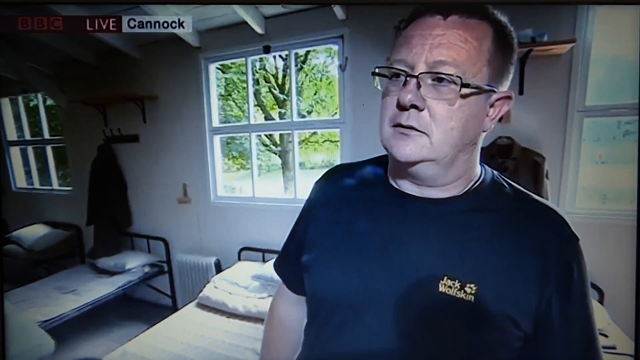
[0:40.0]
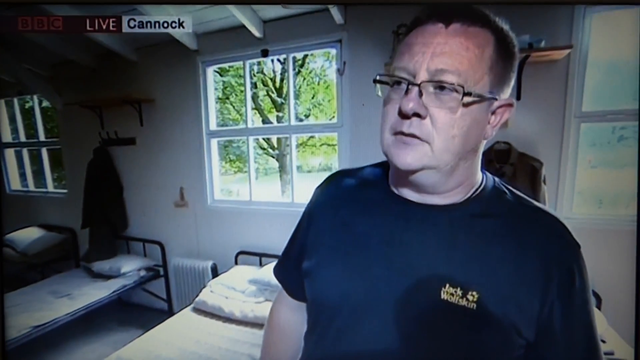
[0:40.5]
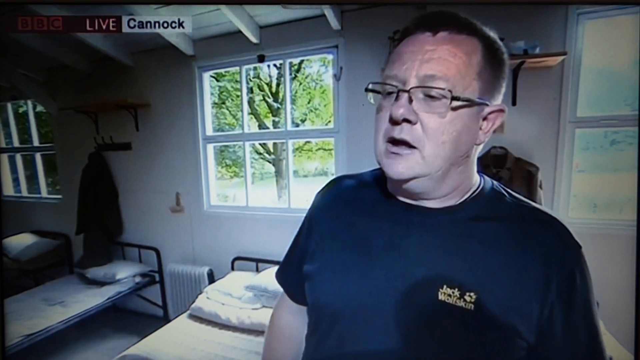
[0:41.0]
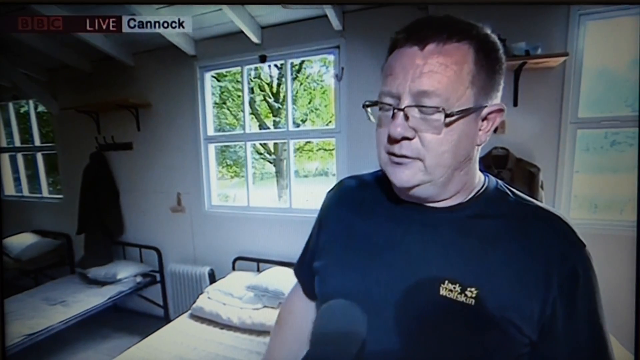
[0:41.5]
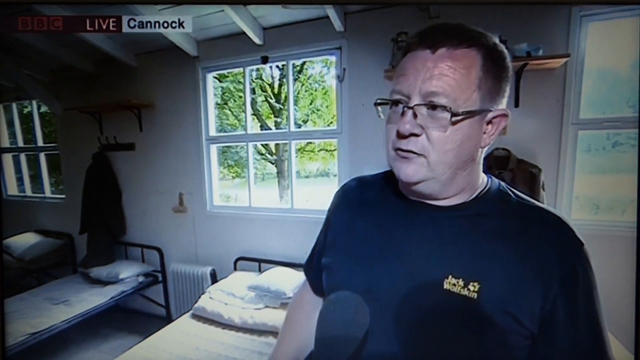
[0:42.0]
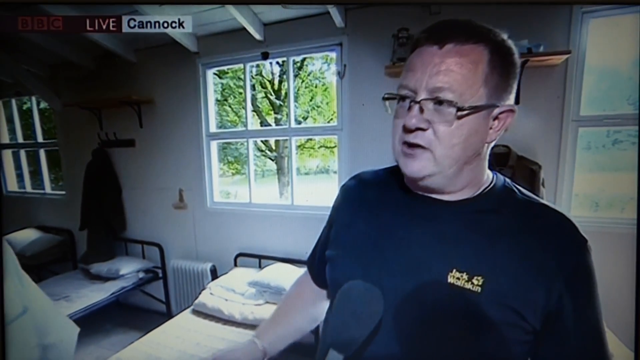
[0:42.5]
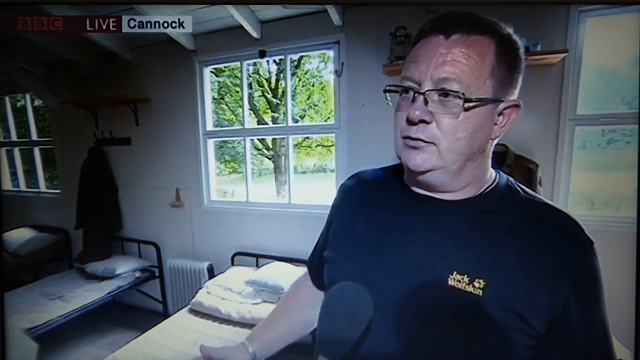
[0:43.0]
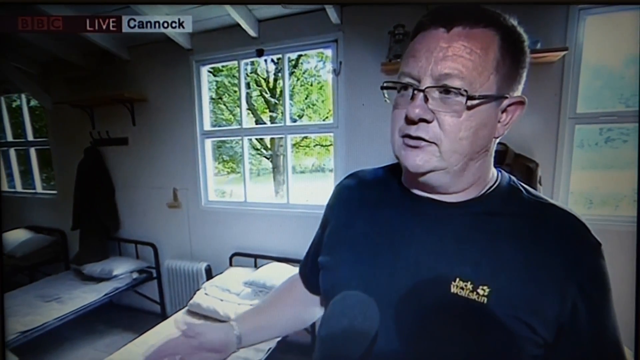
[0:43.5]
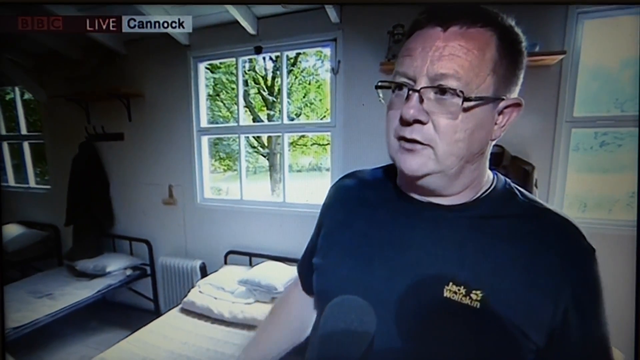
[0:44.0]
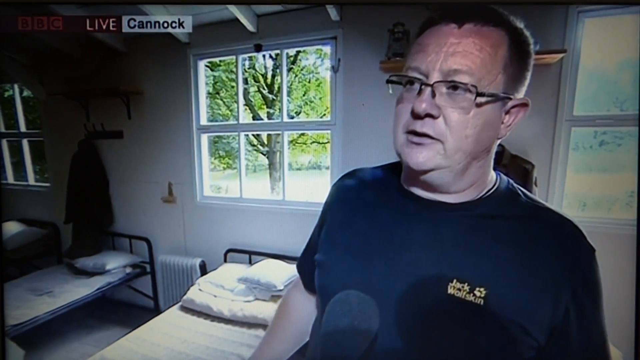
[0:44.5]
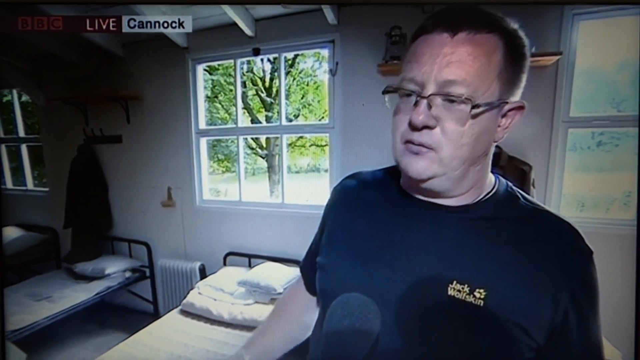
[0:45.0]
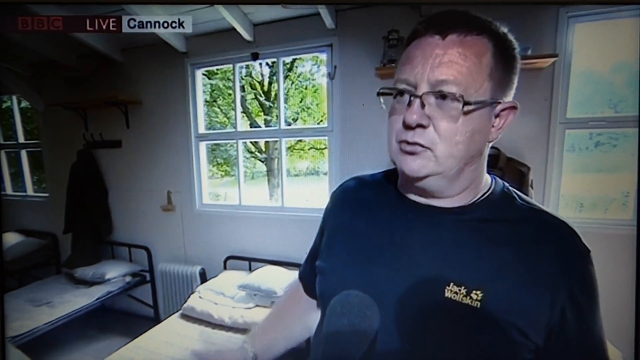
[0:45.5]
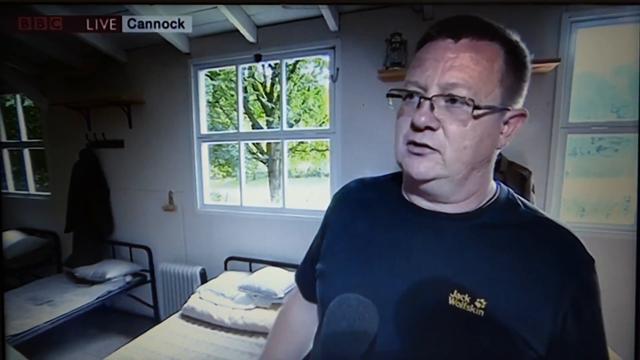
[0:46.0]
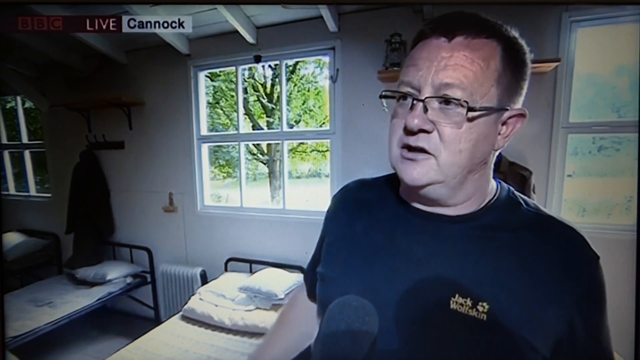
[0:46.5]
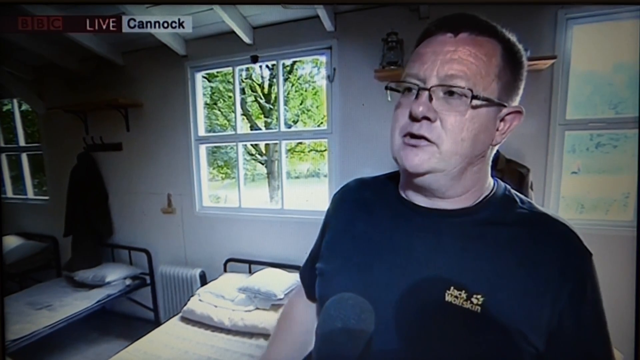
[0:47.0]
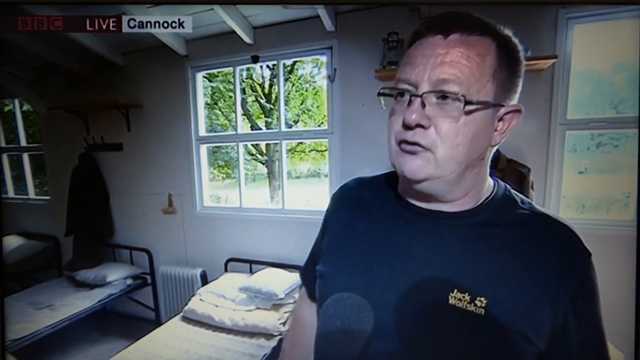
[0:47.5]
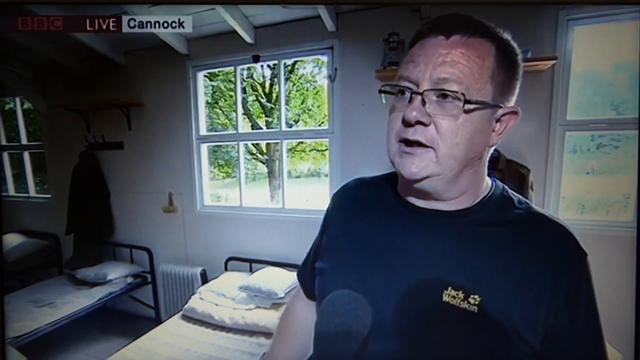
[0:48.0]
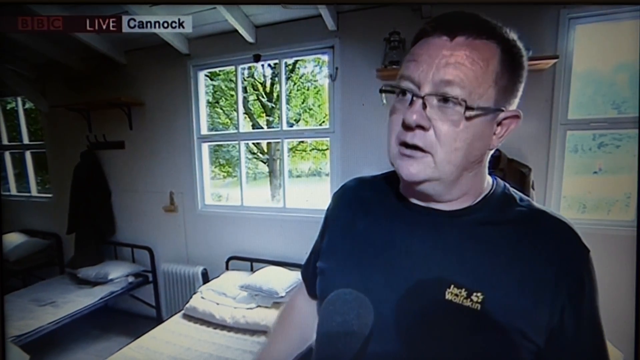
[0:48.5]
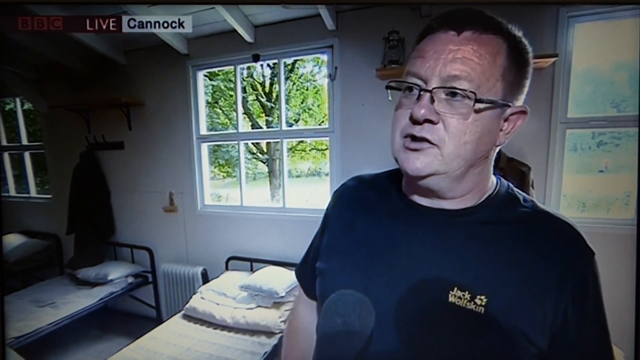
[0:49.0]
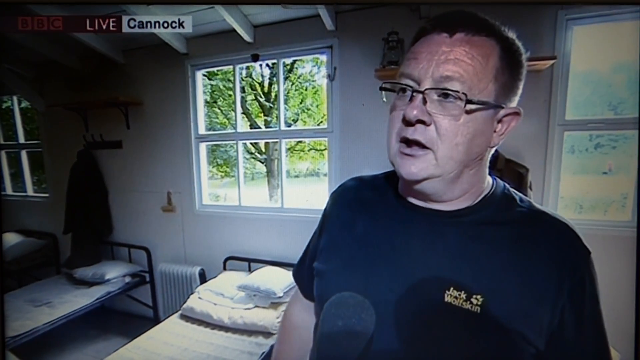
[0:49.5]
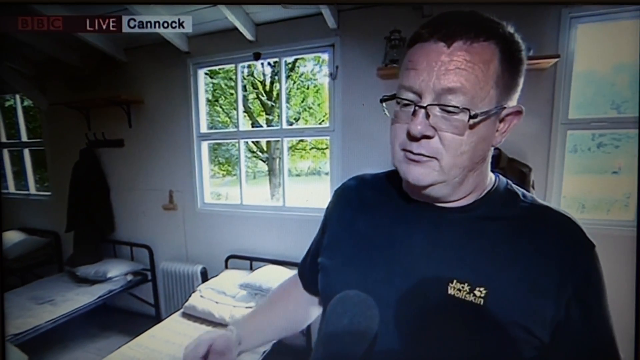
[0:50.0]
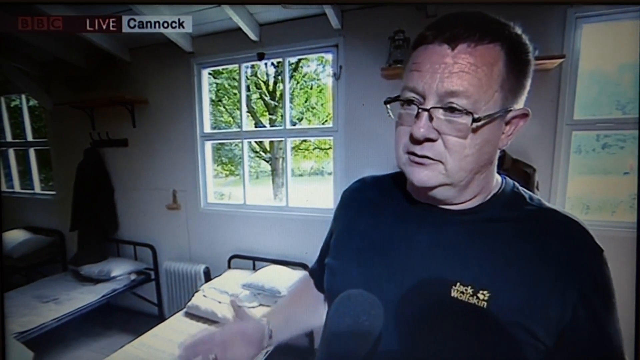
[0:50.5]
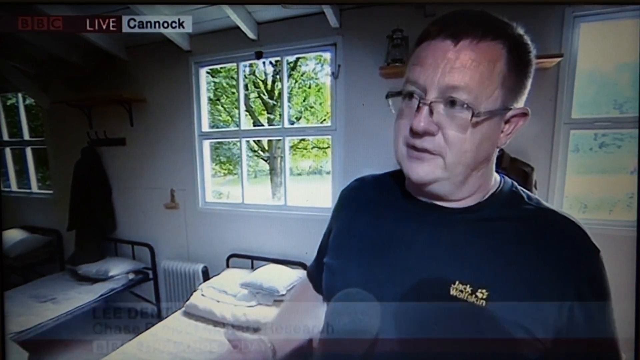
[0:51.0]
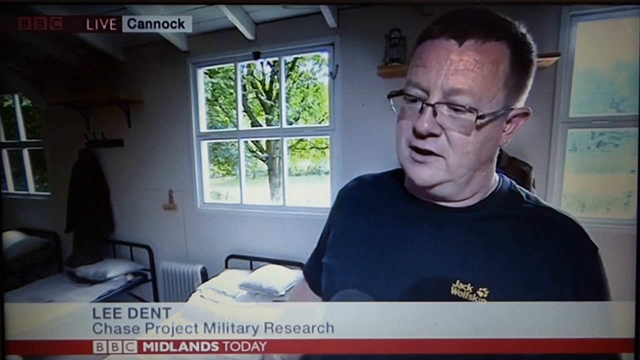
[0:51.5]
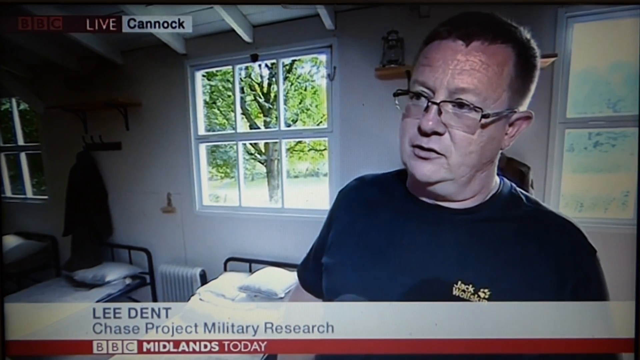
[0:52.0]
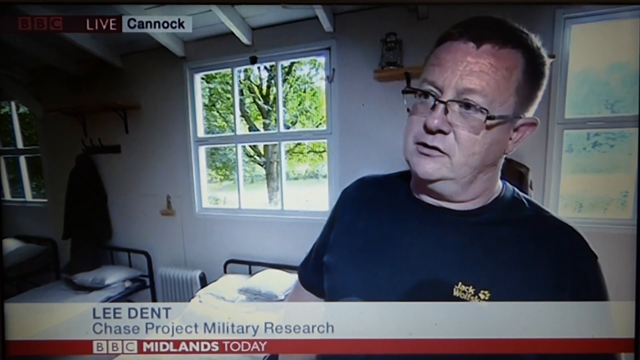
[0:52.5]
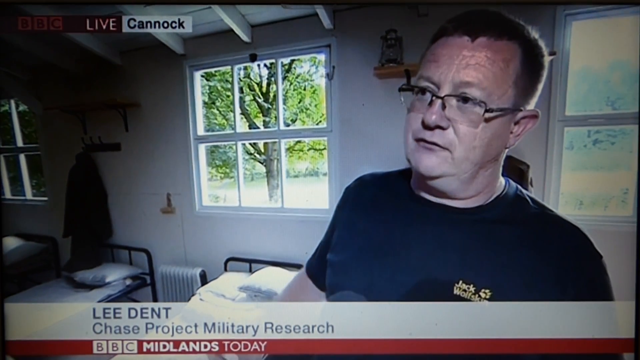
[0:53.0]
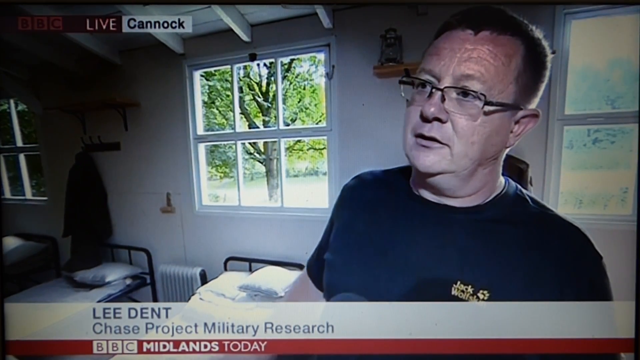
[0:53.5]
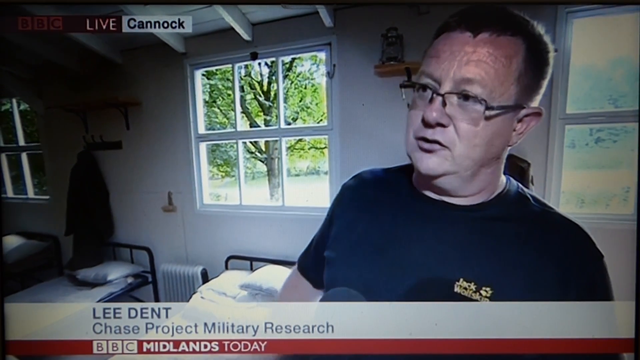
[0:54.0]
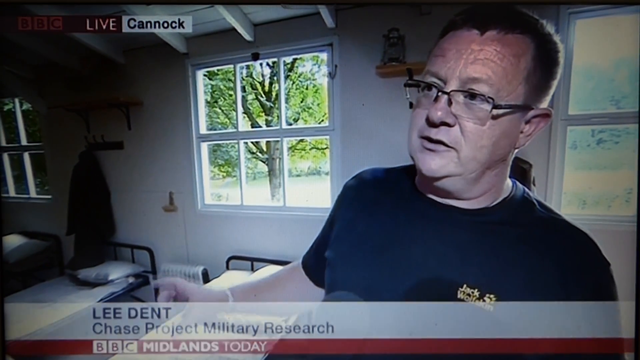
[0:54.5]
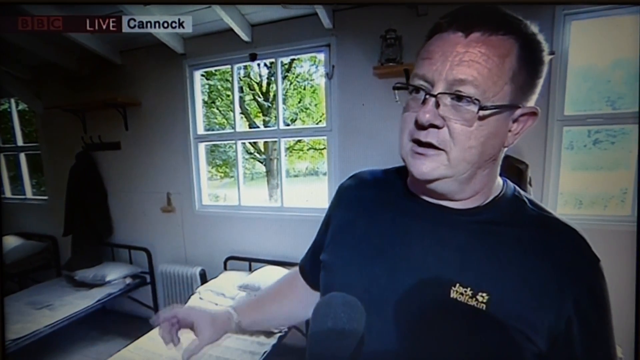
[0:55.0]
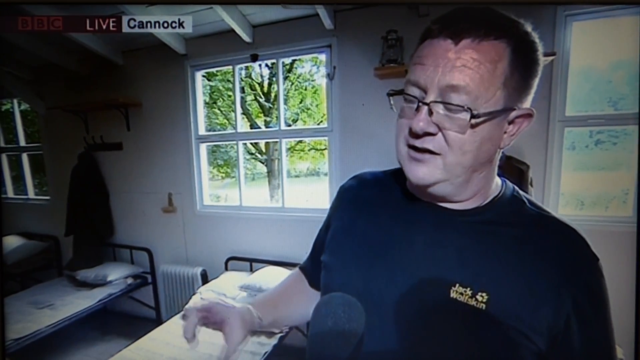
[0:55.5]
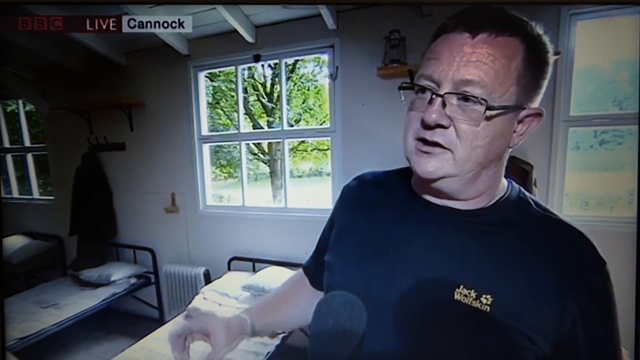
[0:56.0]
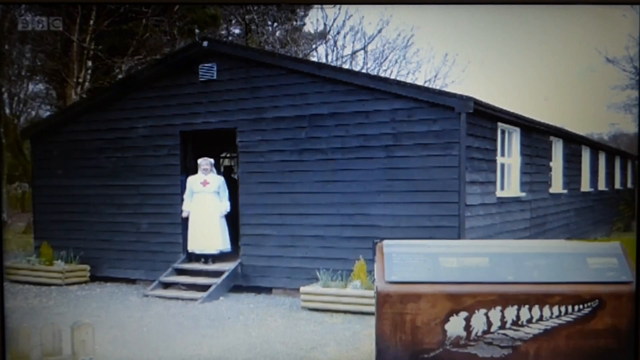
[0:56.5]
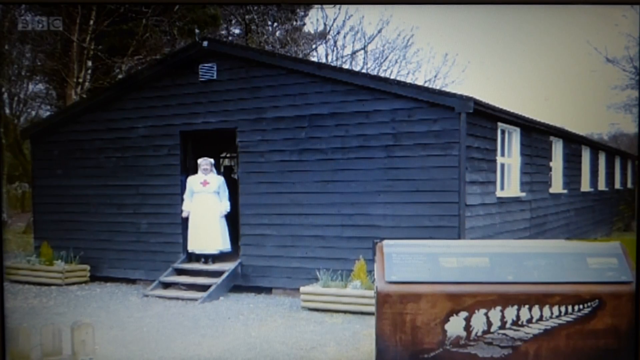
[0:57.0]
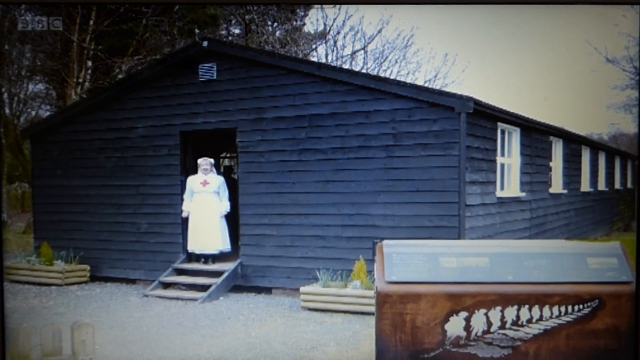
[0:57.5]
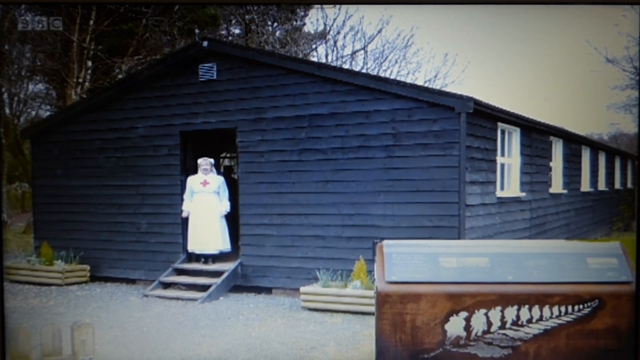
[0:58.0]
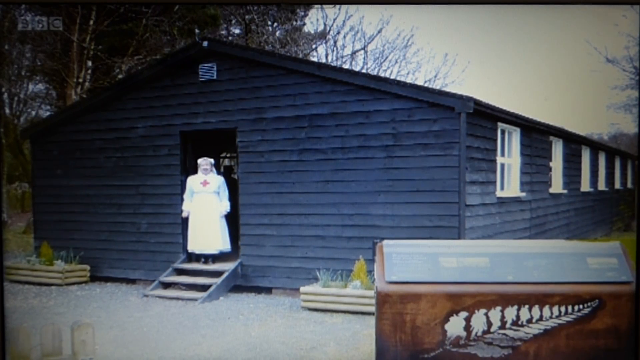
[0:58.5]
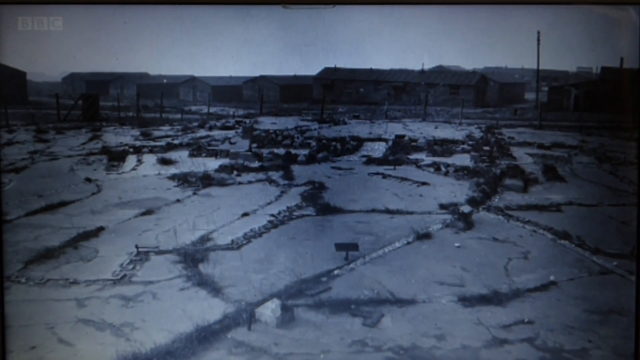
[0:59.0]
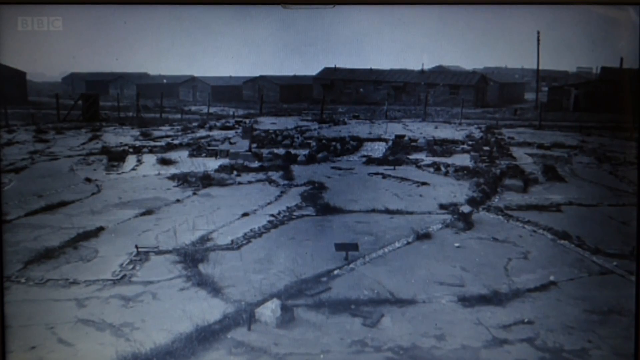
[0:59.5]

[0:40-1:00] Pots are visible in the background. Single beds are visible along both walls; they have no mattresses, just the bed with a light blanket on top and a pillow. Some are blue and some are cream white. A man joins the presenter, apparently a military researcher and possibly a survivor.